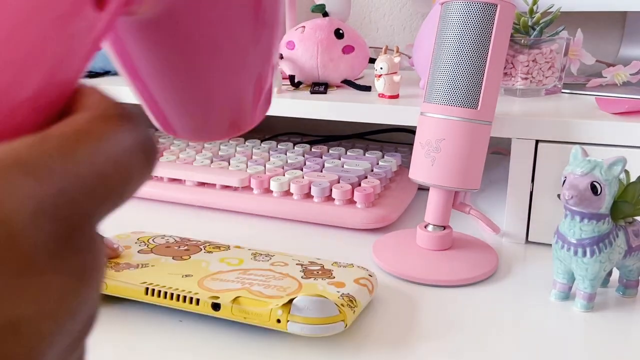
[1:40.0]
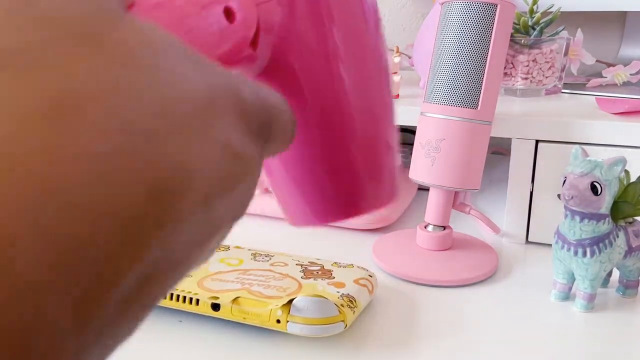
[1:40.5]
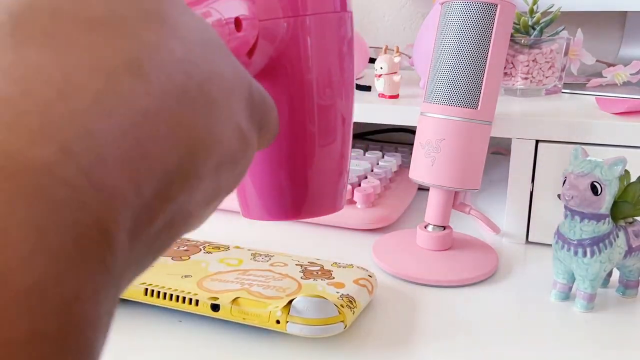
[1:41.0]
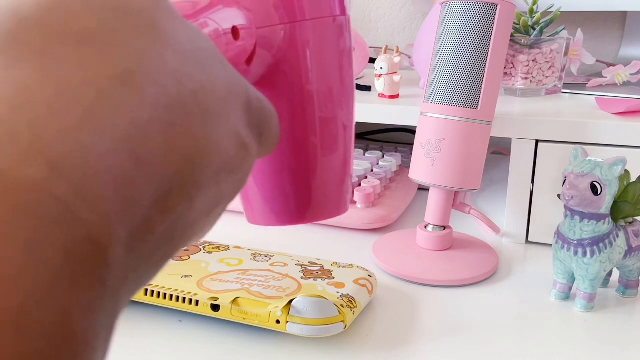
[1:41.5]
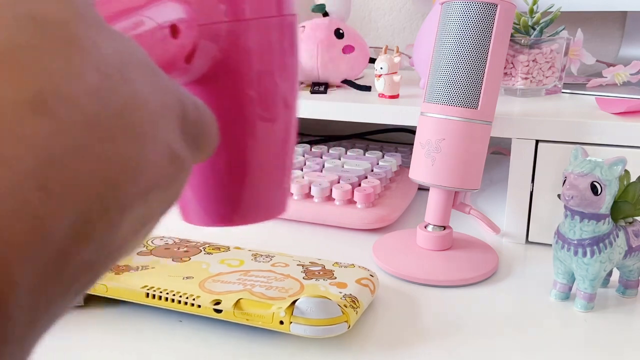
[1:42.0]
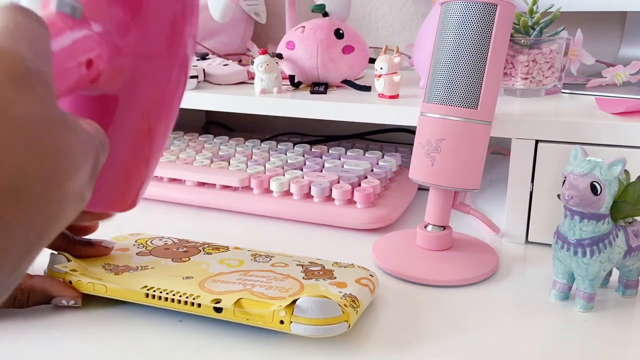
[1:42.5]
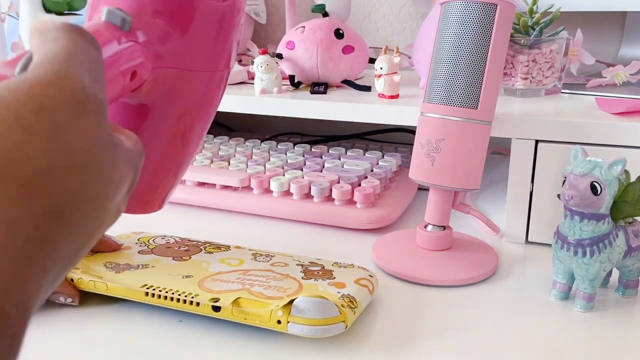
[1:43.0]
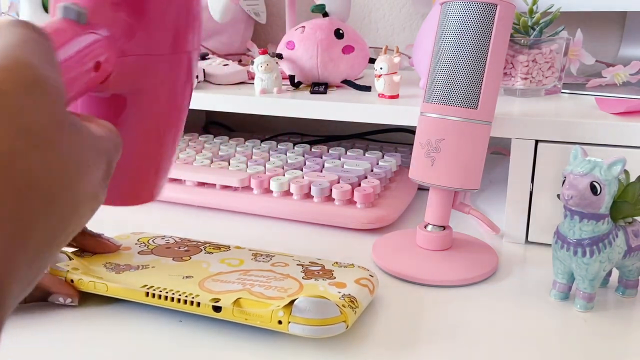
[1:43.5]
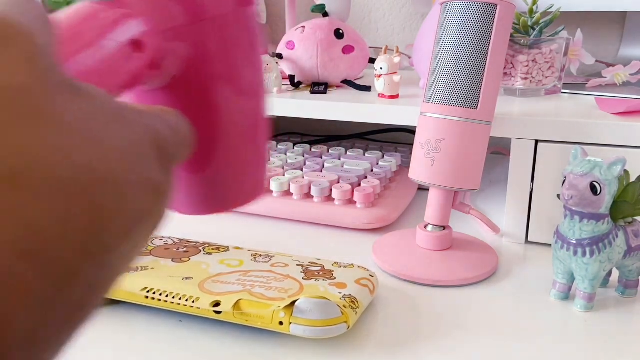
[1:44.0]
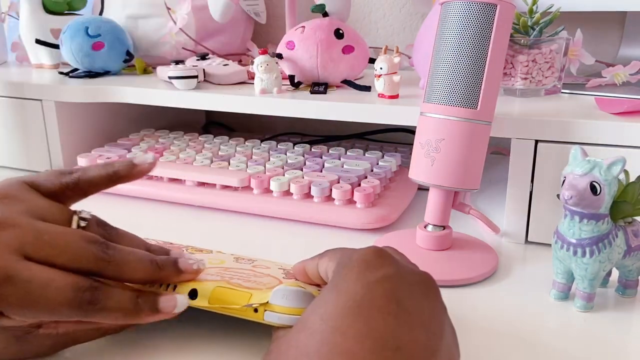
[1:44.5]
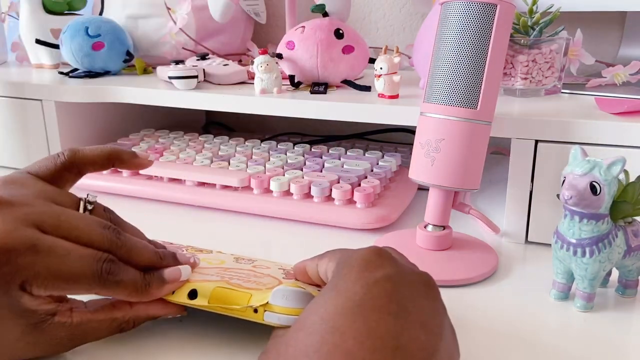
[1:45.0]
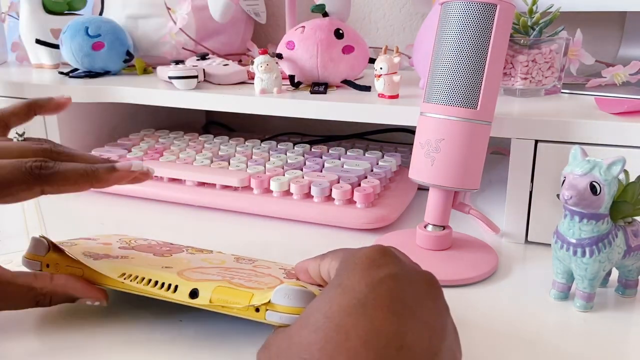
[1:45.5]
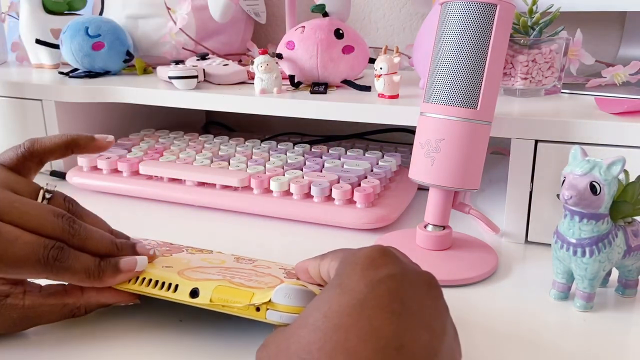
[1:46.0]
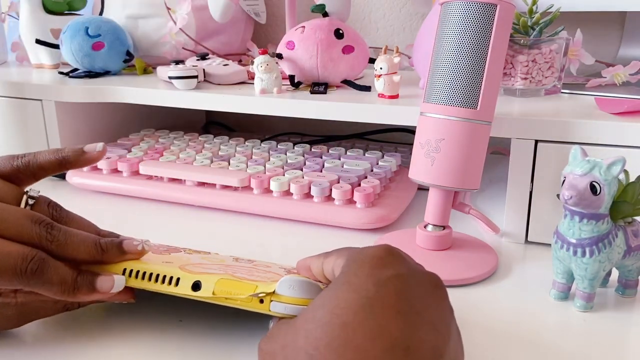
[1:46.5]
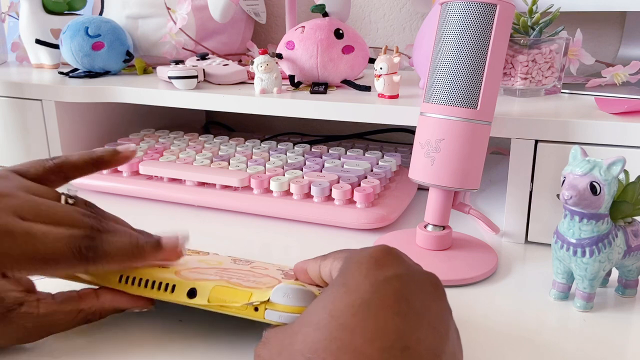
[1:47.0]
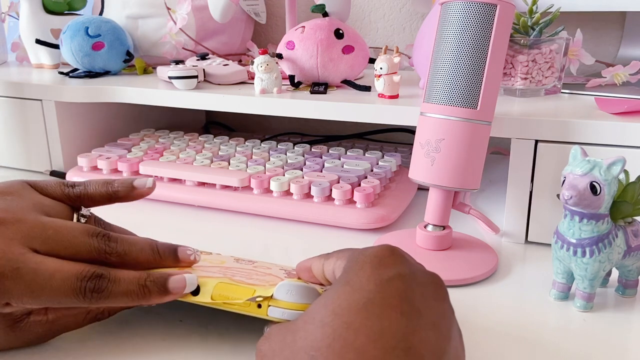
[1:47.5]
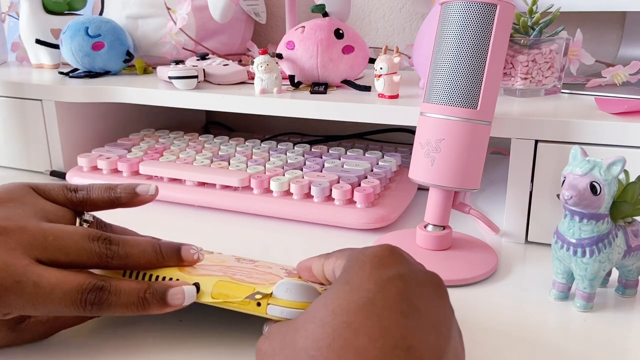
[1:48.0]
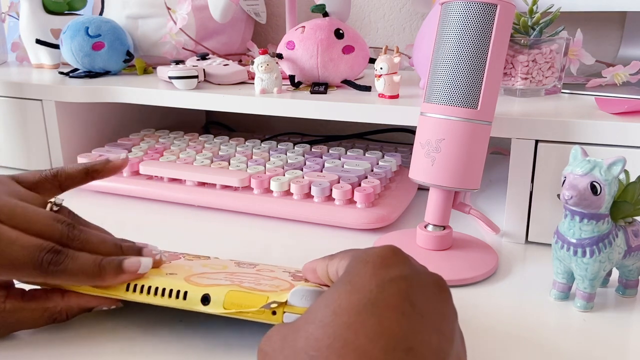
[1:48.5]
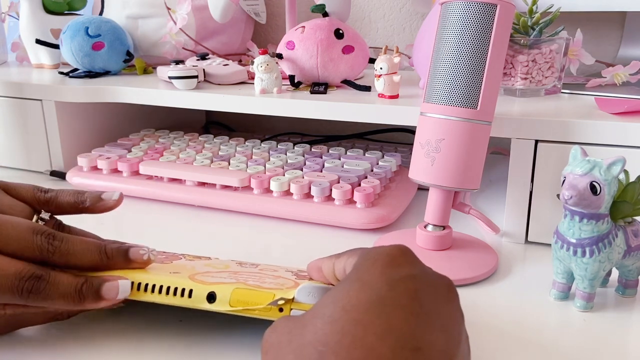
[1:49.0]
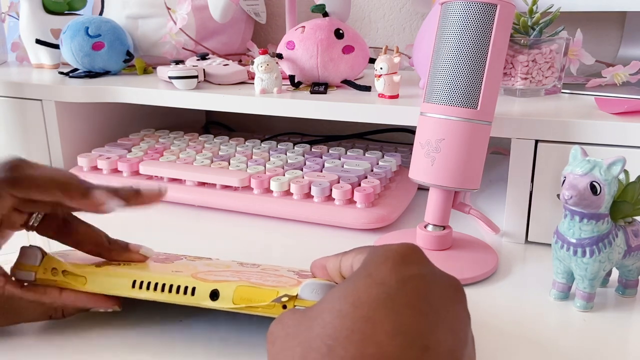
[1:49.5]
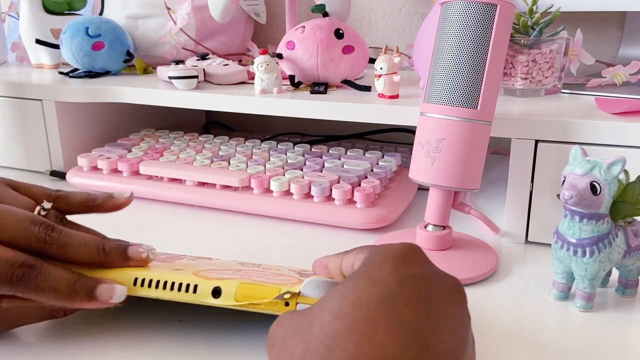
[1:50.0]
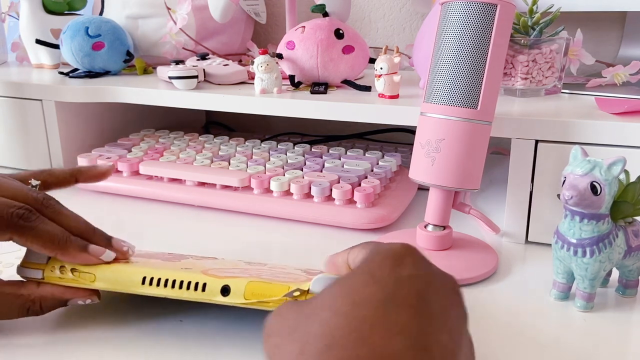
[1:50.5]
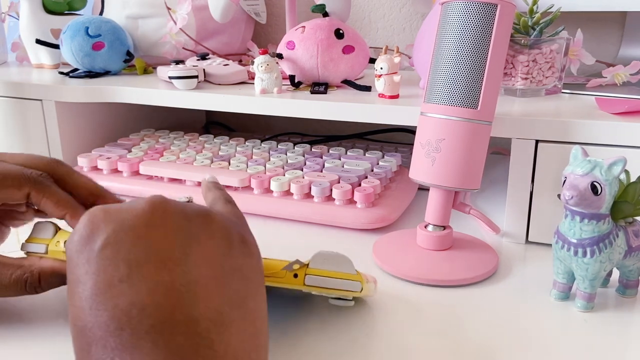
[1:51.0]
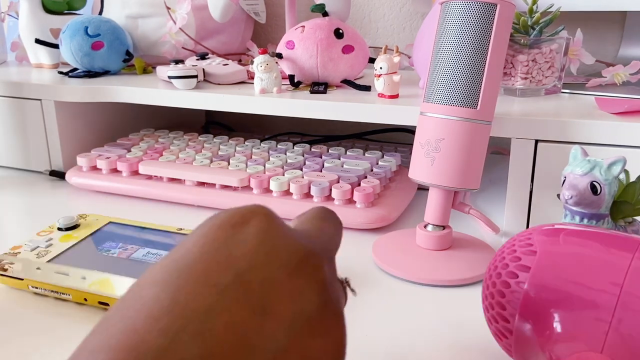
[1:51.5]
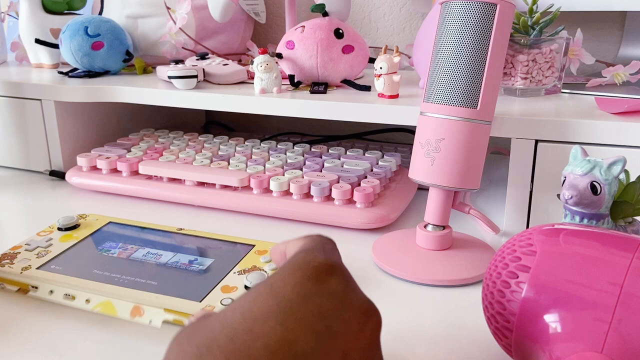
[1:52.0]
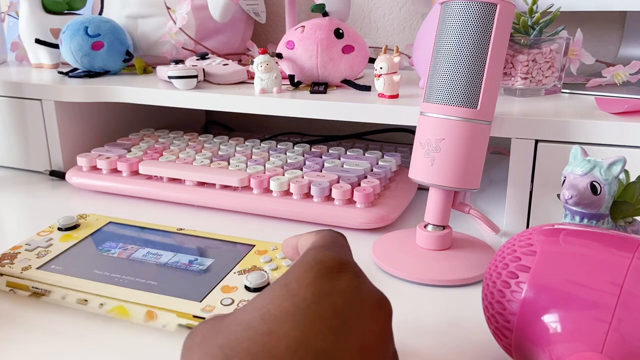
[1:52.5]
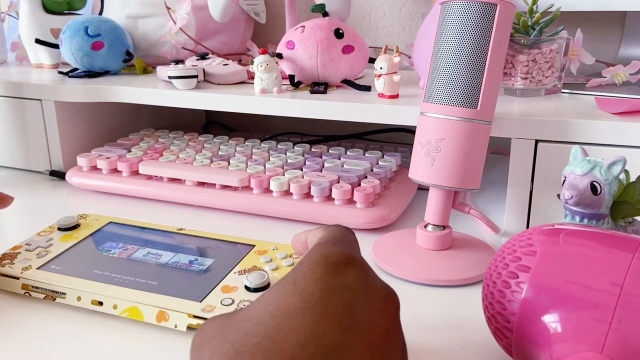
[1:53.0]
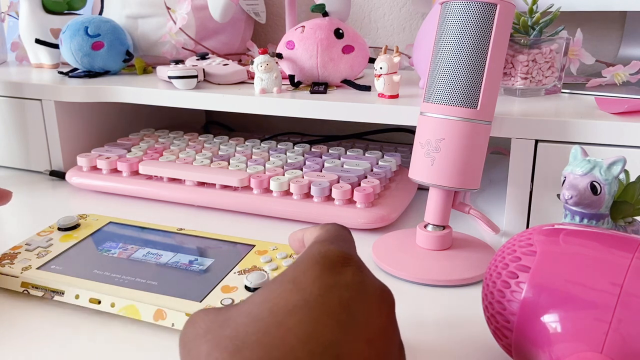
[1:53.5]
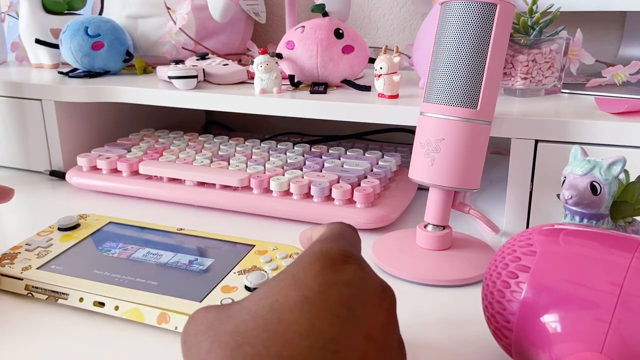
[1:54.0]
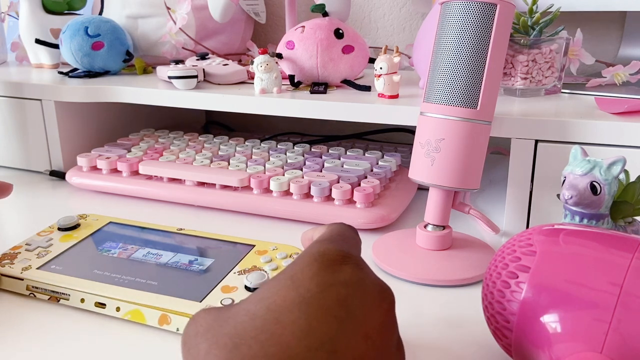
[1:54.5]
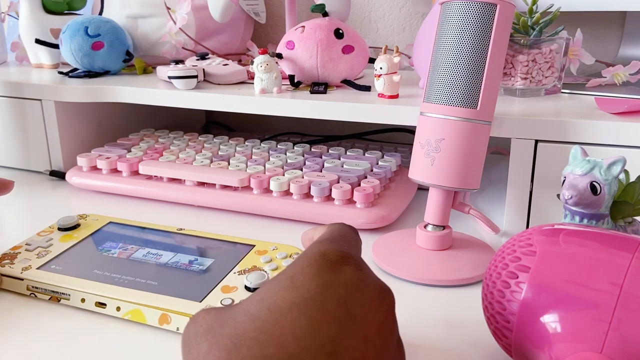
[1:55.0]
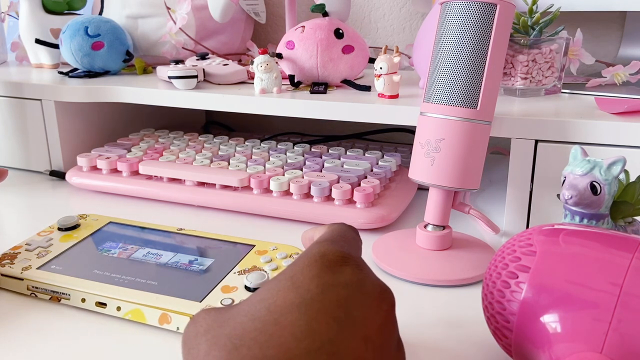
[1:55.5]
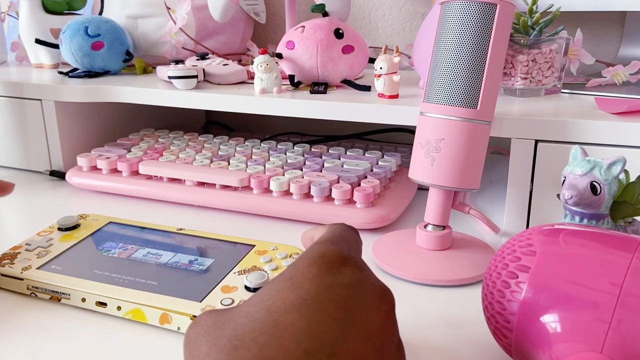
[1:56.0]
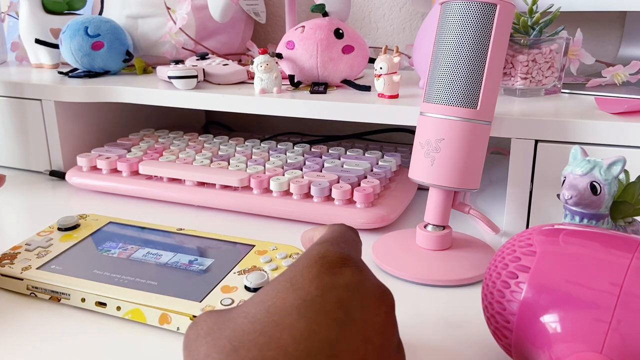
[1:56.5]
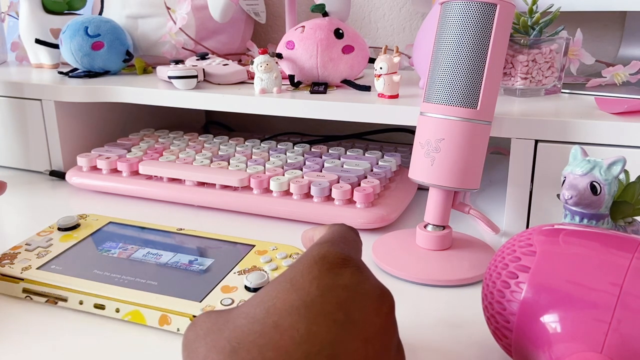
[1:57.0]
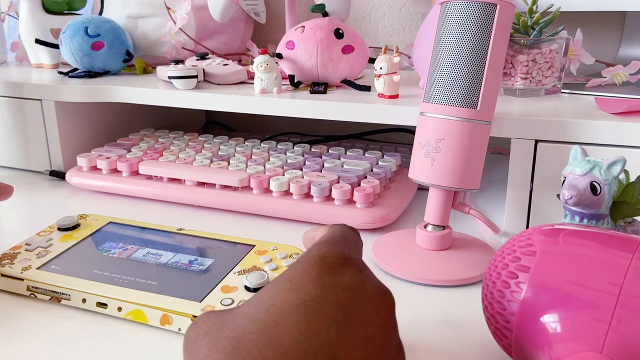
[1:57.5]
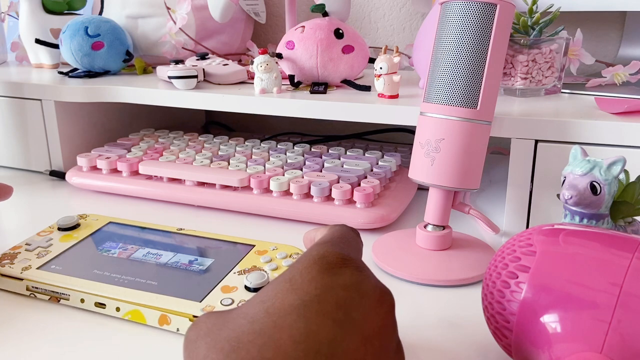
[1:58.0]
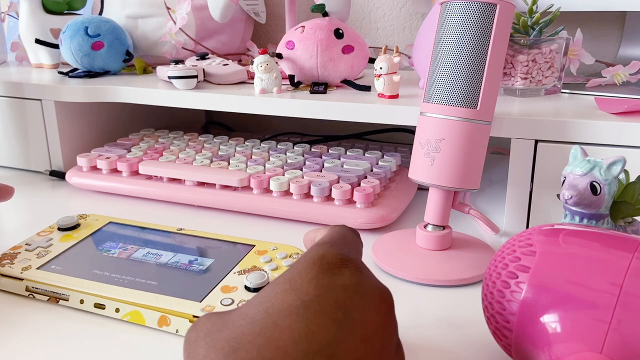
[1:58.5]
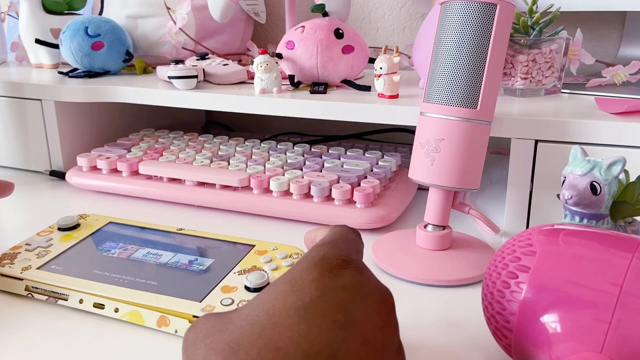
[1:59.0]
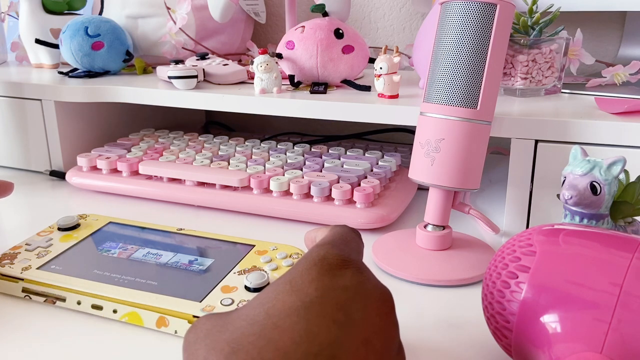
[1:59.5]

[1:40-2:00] A hand appears from the left end of the frame holding a very light pink object pointed at a yellow console, which is on the white surface of a desk. The hand moves this magenta object over the surface of the console, after which two hands in the lower left corner of the frame handle the object, rotating it and repositioning it on the white surface of the desk. Finally, the person places a very thin rectangular piece of paper at the base of the console while images appear on the console's screen. In the background there are objects of different types, all light in color: on the right side a cylinder-shaped pink microphone is visible, and in the center, next to the microphone, there is a keyboard with round pink, white and light purple keys.